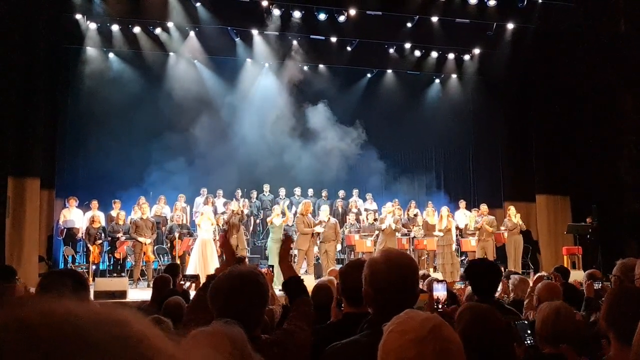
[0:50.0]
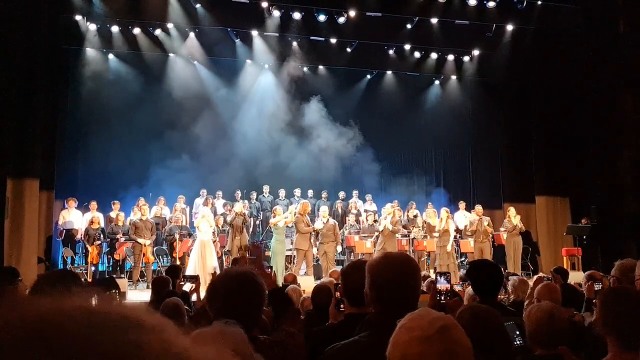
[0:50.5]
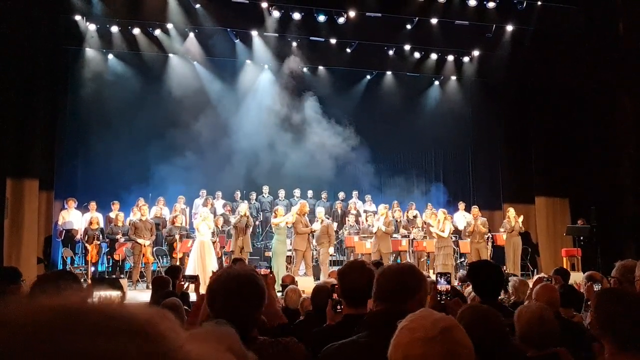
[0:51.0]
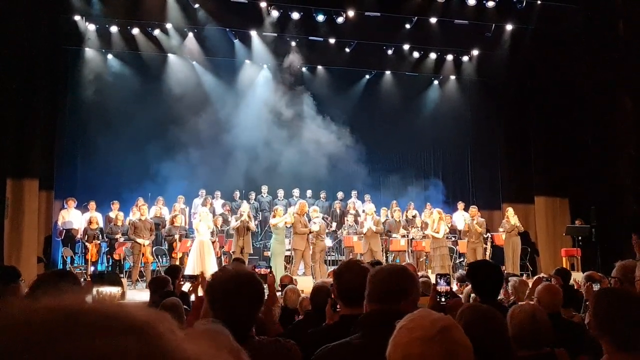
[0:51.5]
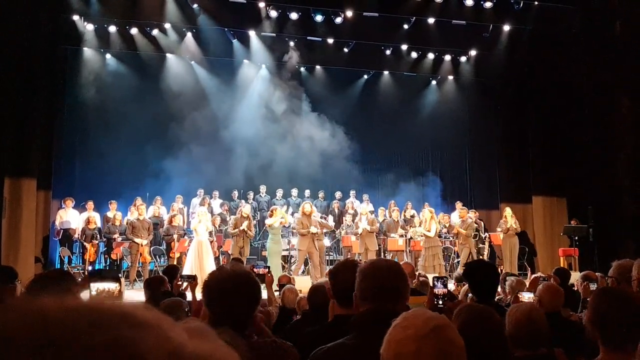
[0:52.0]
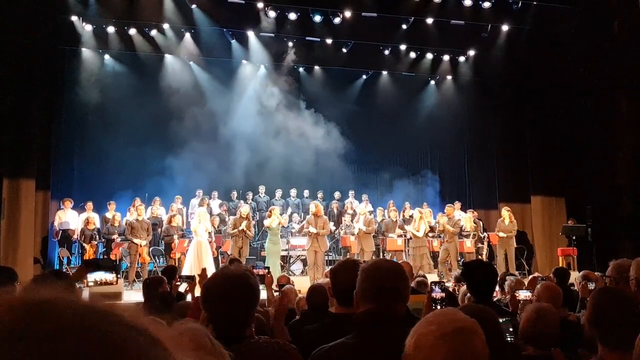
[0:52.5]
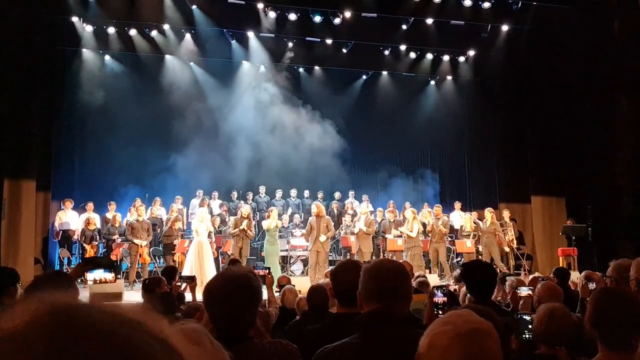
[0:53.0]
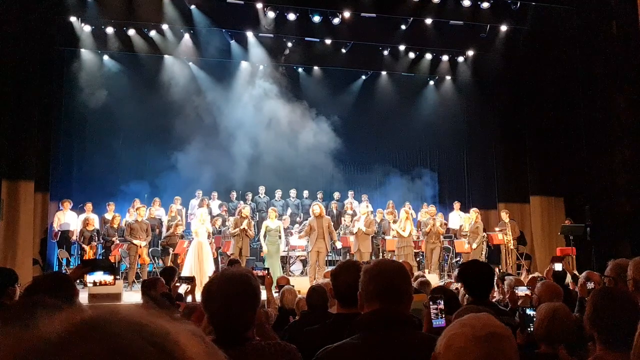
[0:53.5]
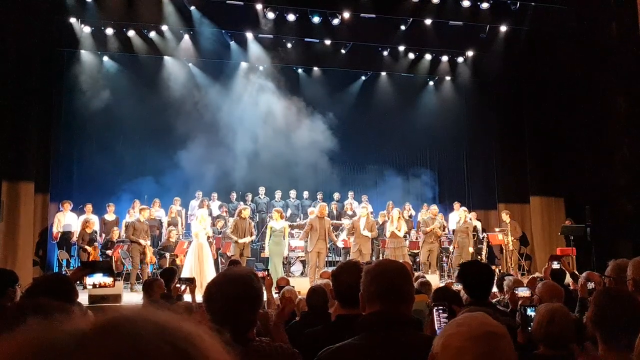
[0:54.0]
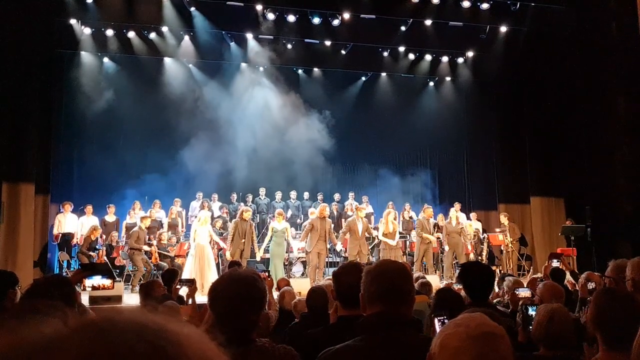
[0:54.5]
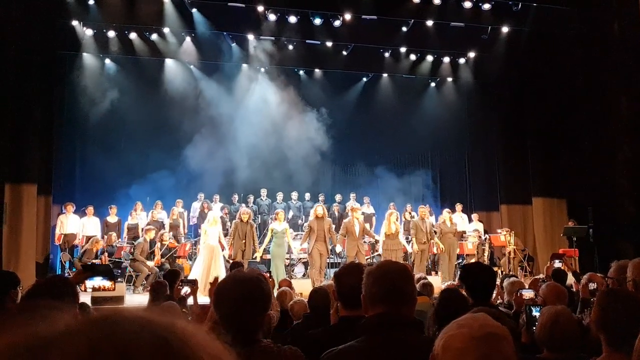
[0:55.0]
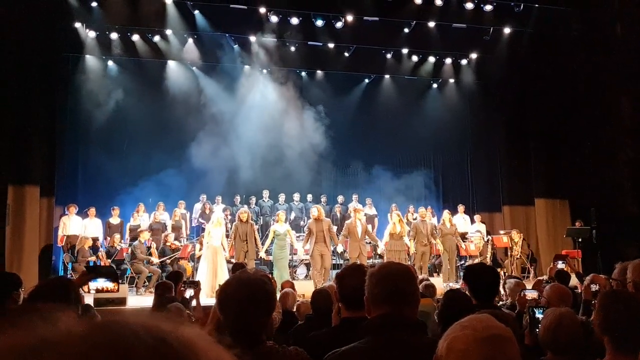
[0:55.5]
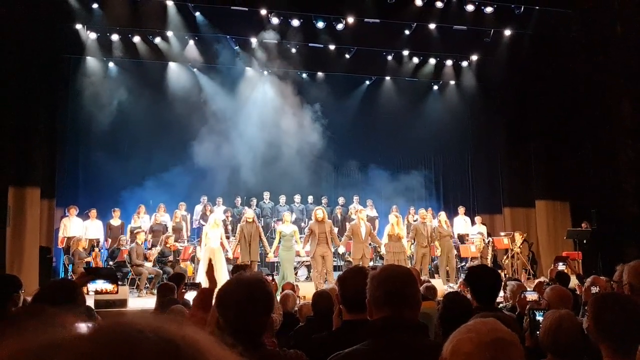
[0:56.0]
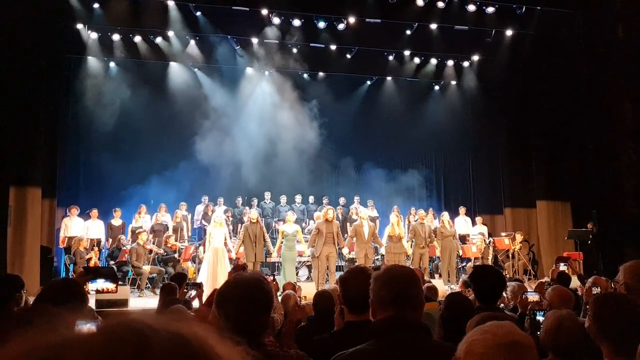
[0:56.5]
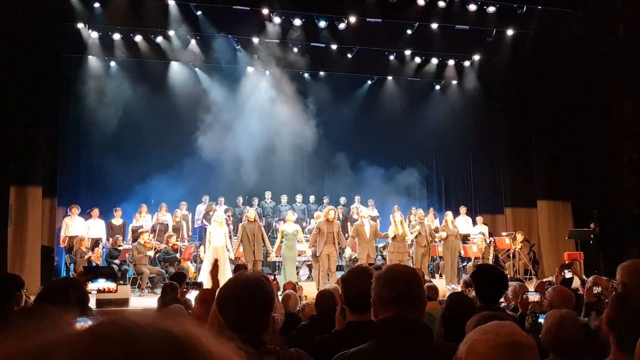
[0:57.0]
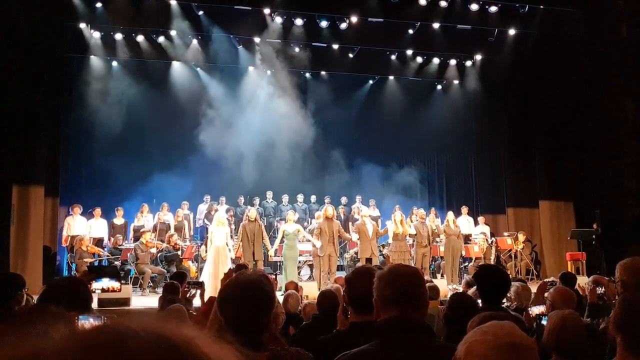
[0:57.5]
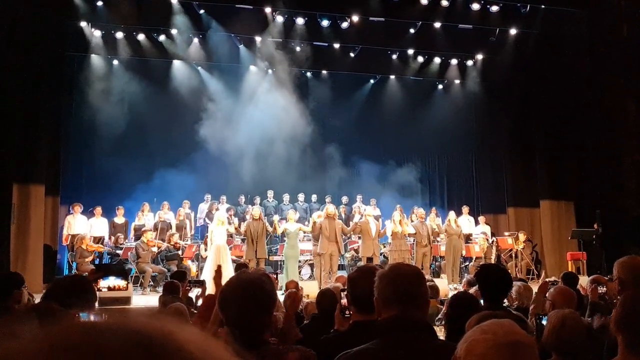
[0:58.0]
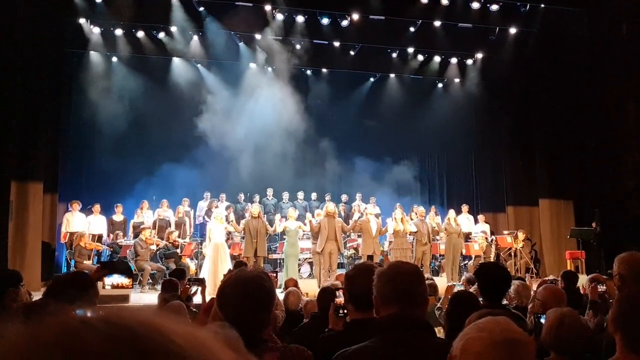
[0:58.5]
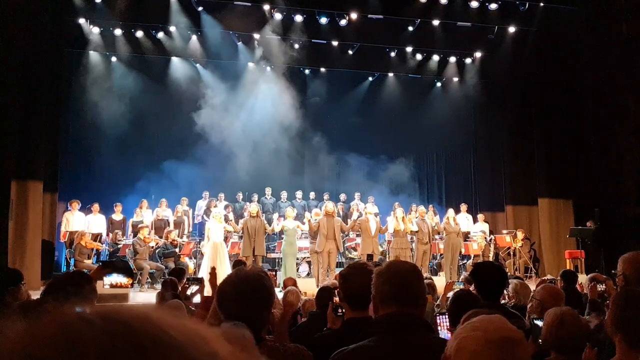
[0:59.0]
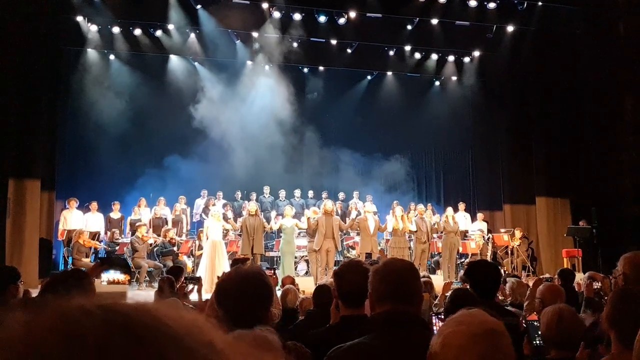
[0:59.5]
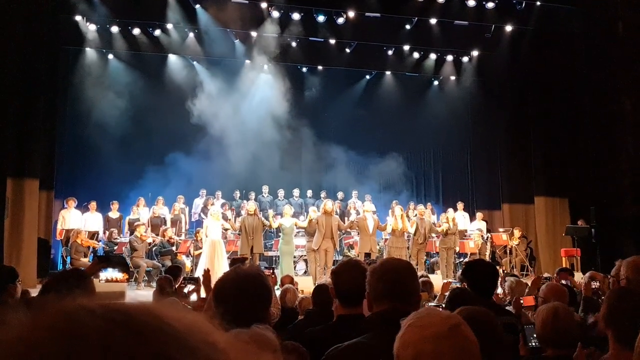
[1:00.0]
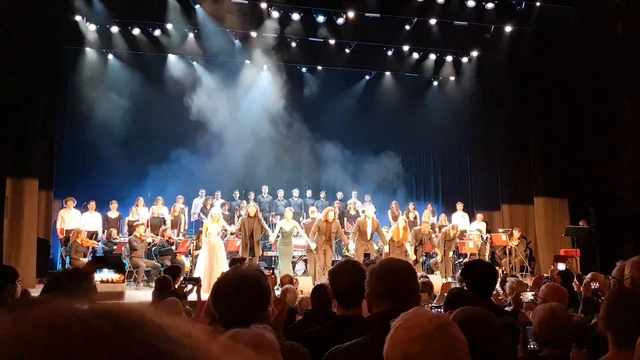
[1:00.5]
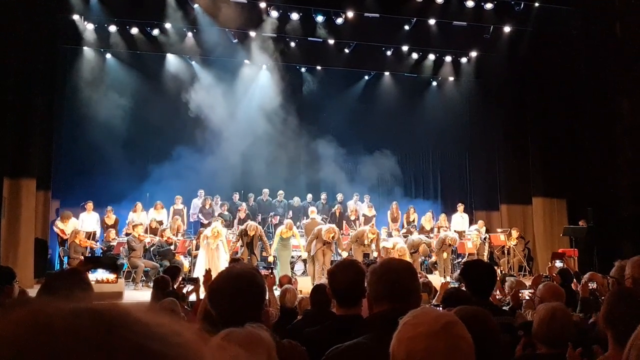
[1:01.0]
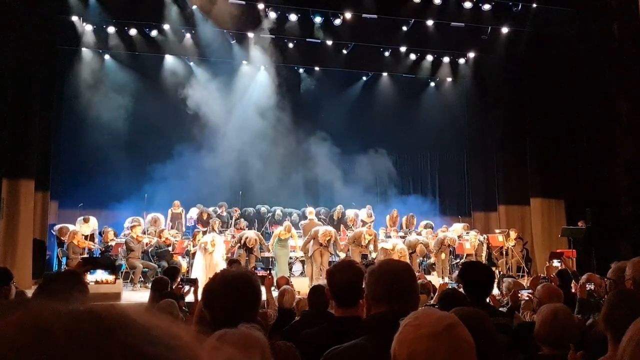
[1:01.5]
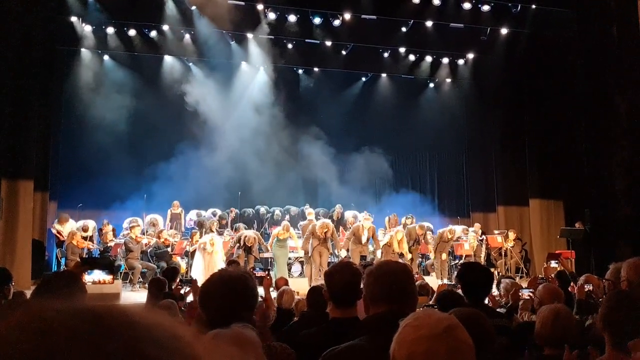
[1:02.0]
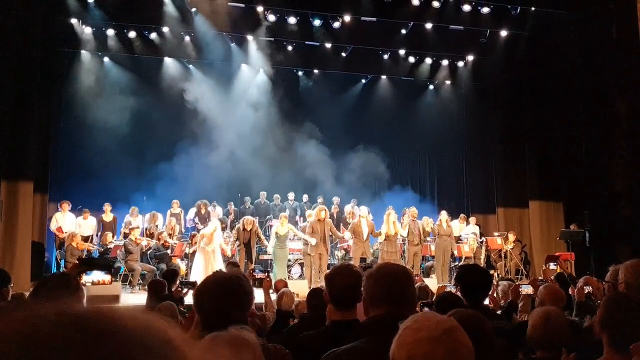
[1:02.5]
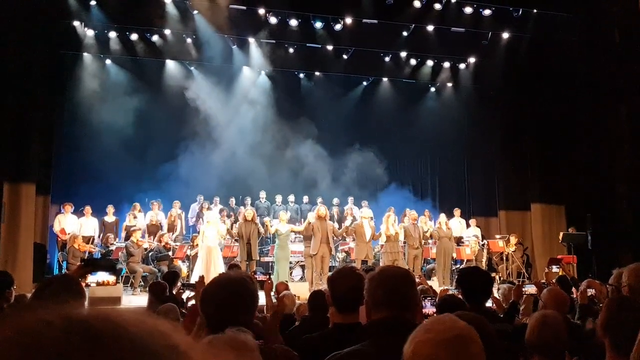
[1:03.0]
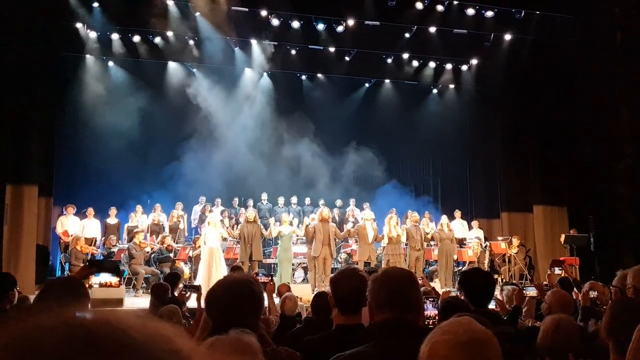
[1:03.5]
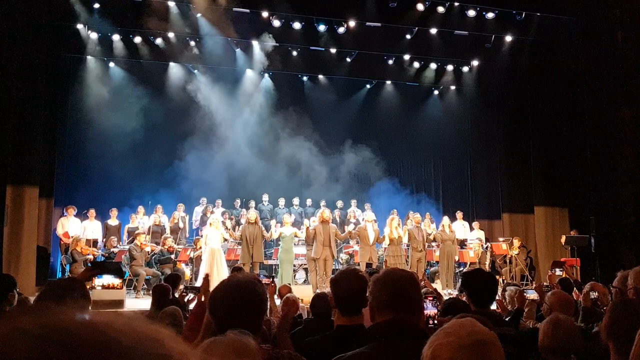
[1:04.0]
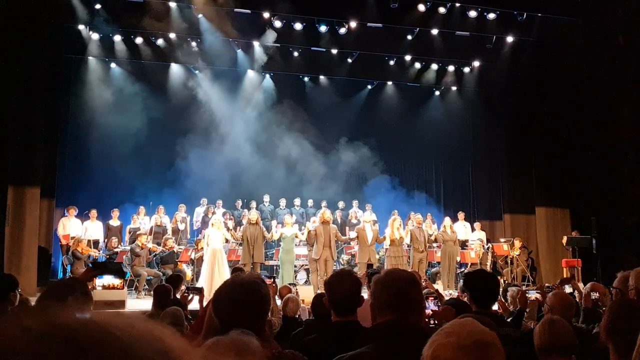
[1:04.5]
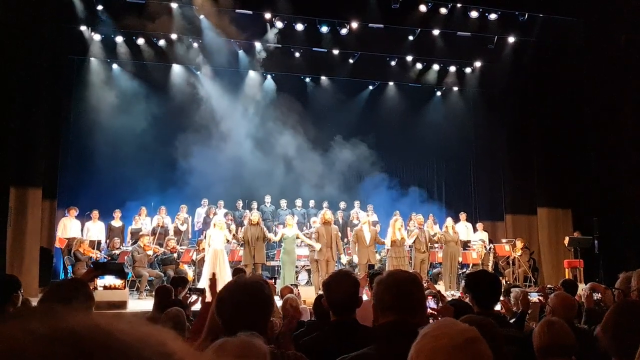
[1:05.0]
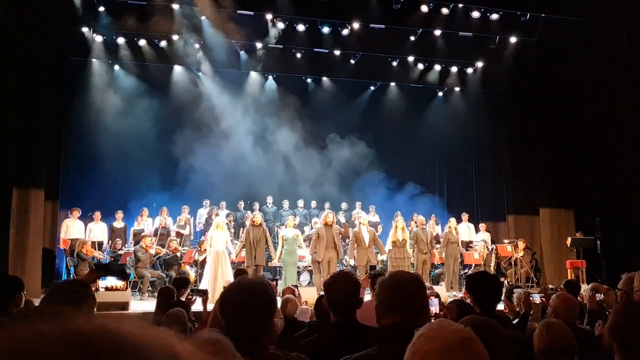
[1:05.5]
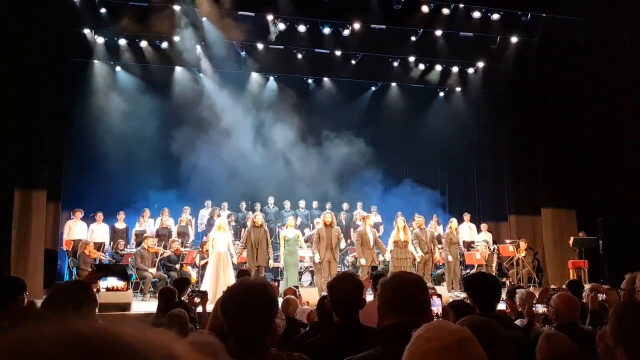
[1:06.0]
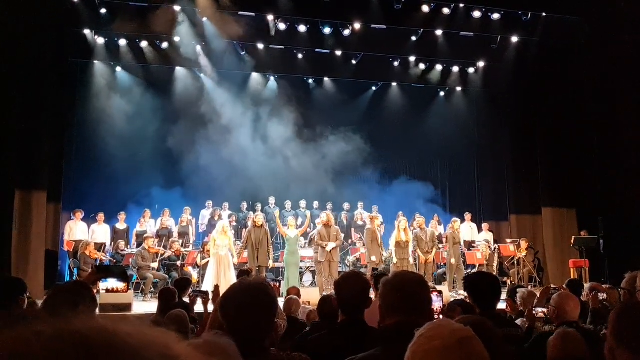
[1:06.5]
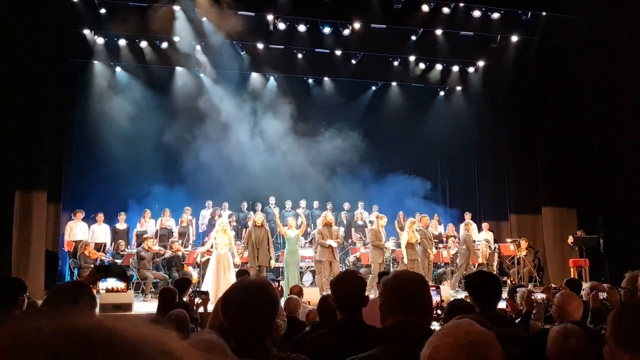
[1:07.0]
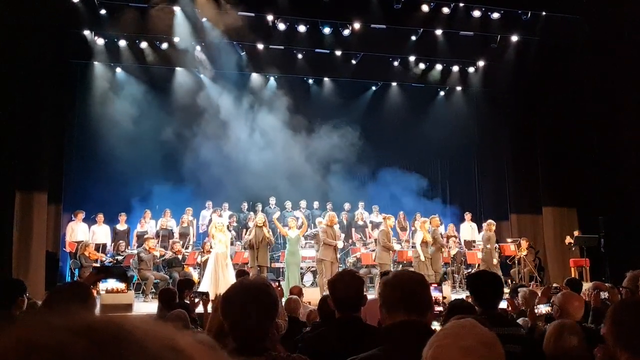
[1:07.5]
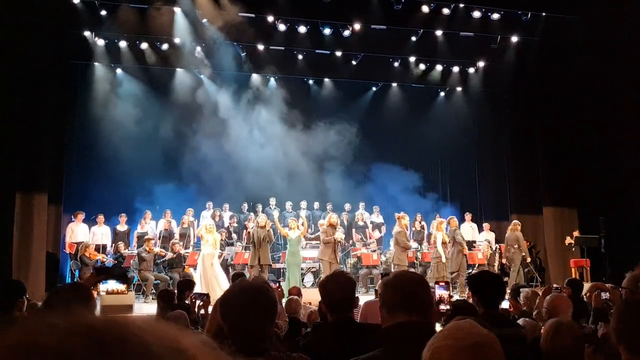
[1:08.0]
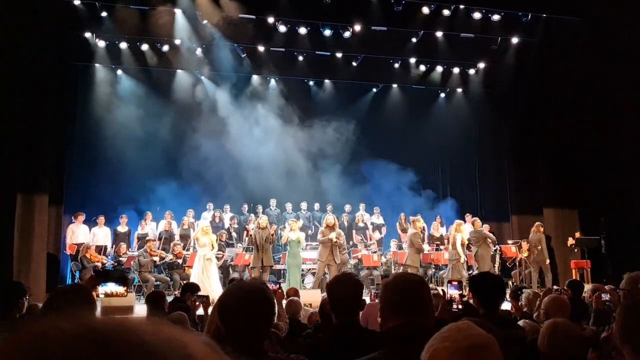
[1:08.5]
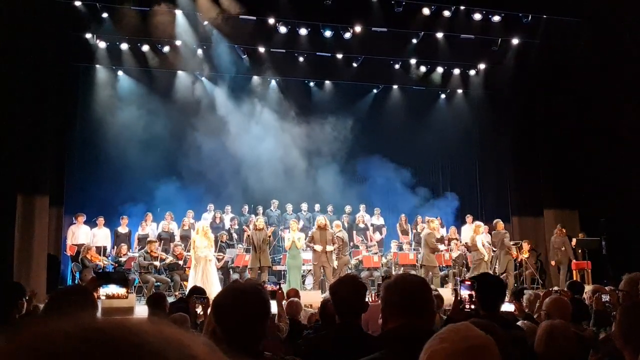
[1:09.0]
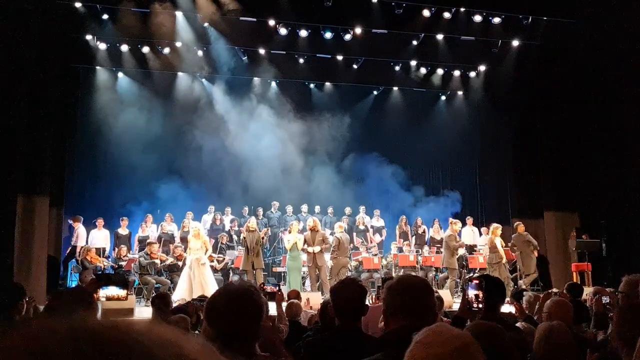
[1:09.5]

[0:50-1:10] The whole group is being acknowledged, and the principal musicians or artists at the front apparently recognize the people behind them while the audience shows its appreciation. There are many performers, with lighting and staging, in what appears to be a large auditorium.